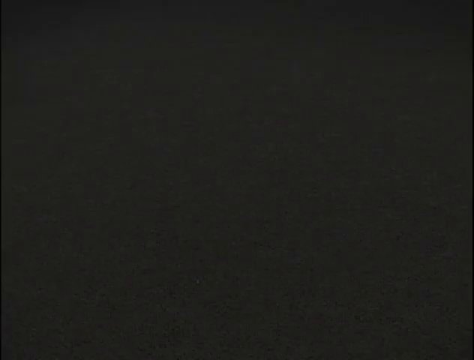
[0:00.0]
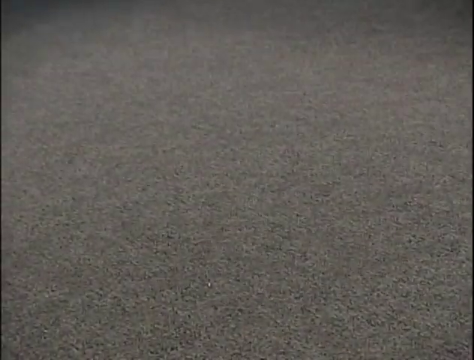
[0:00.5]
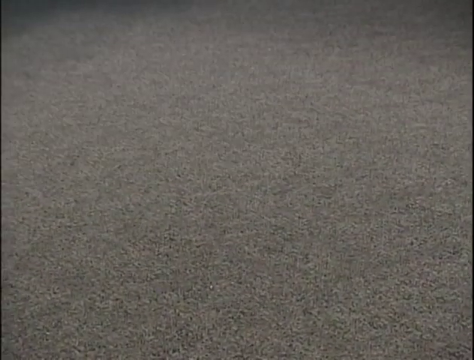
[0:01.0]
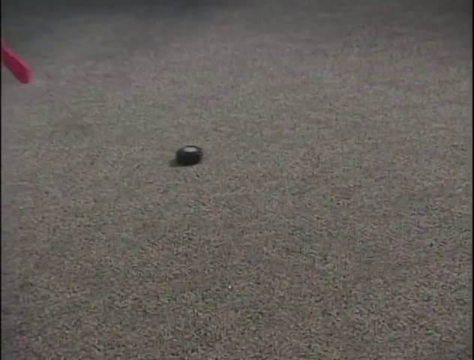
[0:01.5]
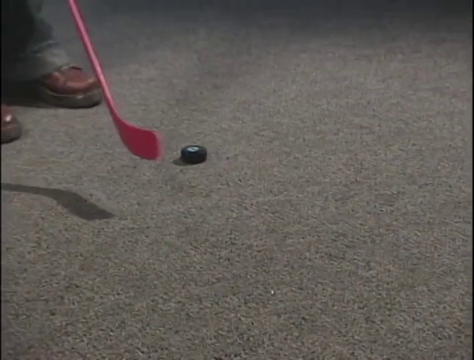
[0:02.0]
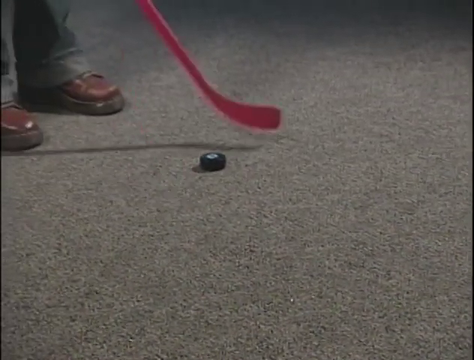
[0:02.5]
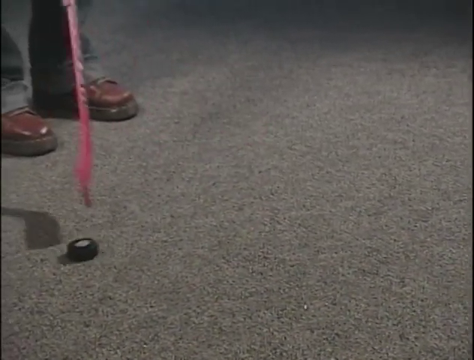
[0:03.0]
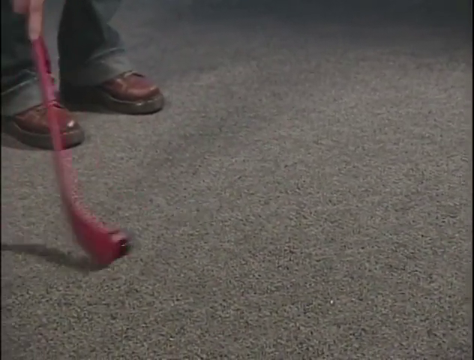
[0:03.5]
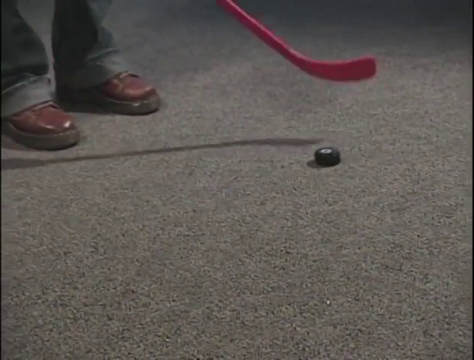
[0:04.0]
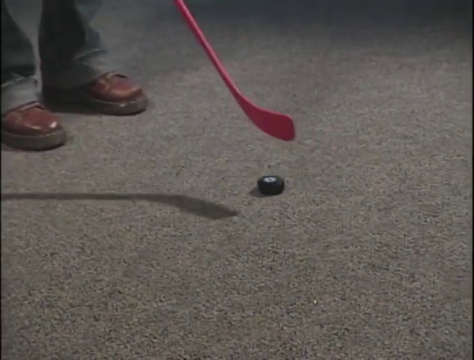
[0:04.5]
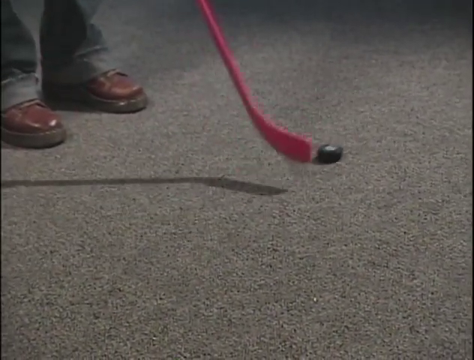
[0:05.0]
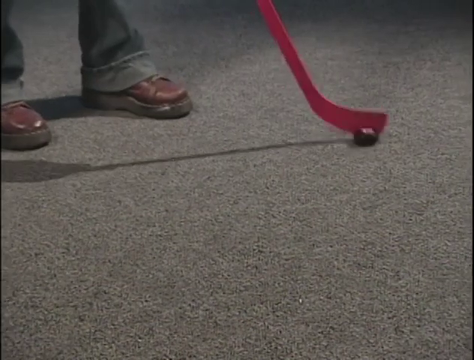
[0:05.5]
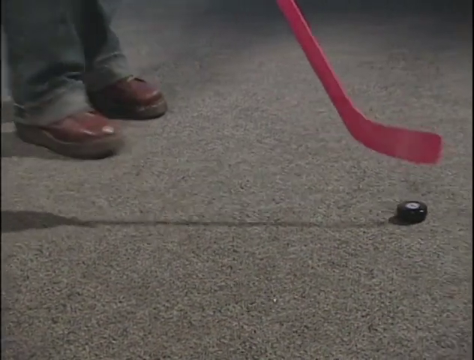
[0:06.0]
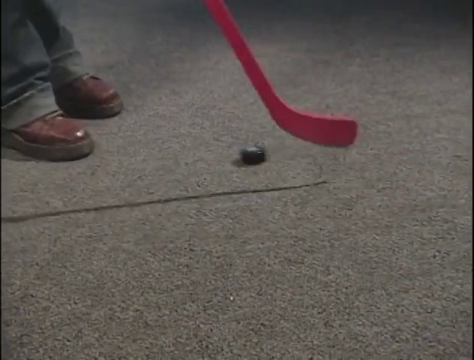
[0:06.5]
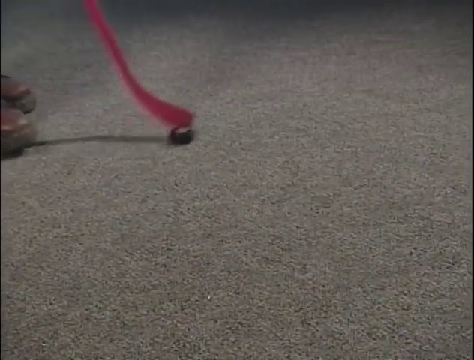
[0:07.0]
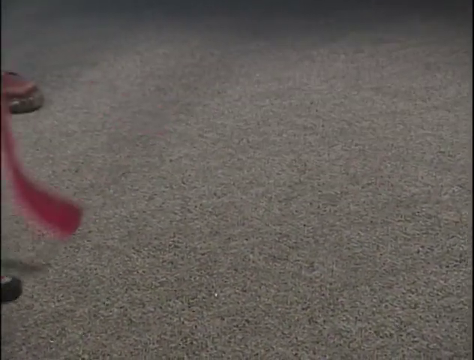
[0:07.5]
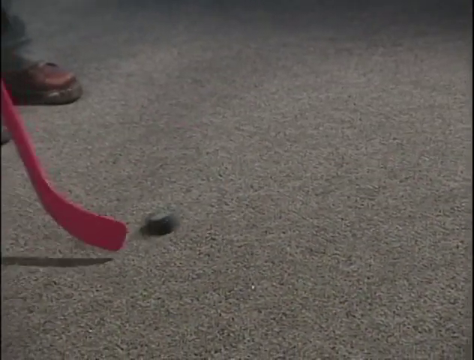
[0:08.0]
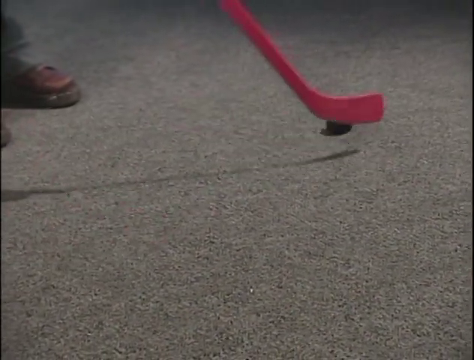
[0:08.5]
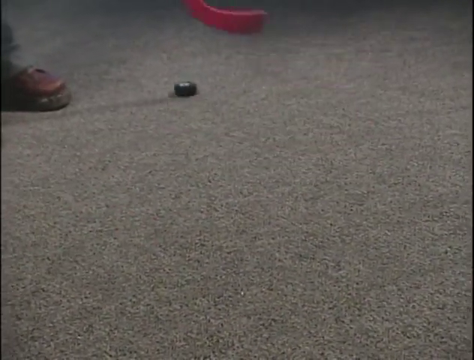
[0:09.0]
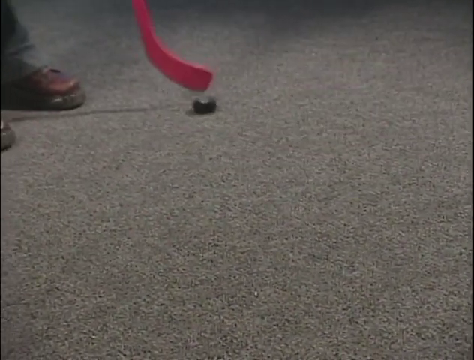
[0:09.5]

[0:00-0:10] The video opens on a gray floor that looks like carpet. A man, apparently wearing brown shoes and very long jeans that are cuffed over, holds a pink hockey stick and bats a hockey puck around. Someone hits the puck toward him, and he bats it first right, then left, then right and left, up and down, right and left, back and up, and then everything stops. It appears to be a demonstration.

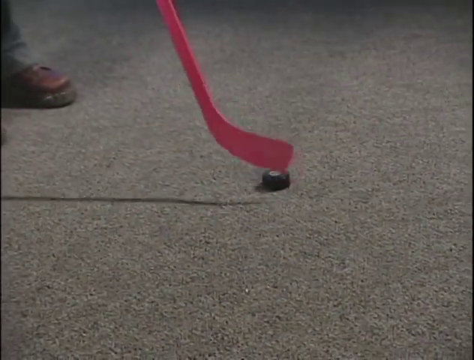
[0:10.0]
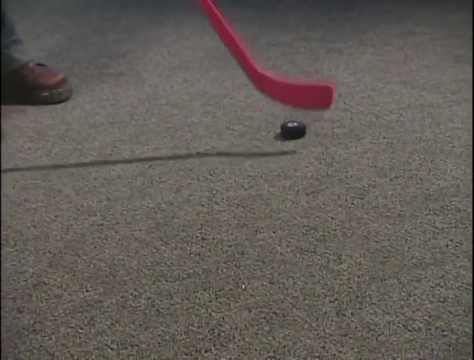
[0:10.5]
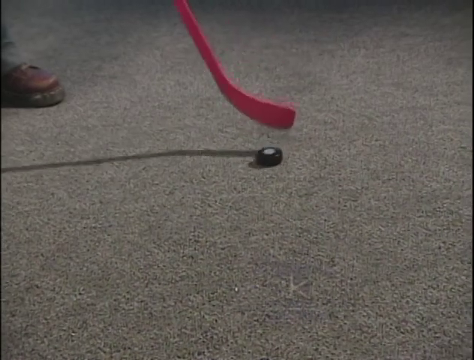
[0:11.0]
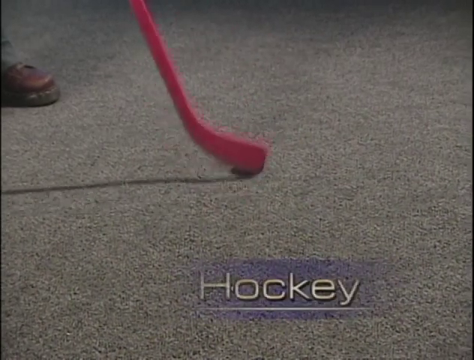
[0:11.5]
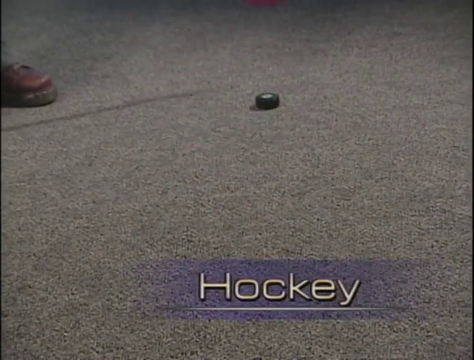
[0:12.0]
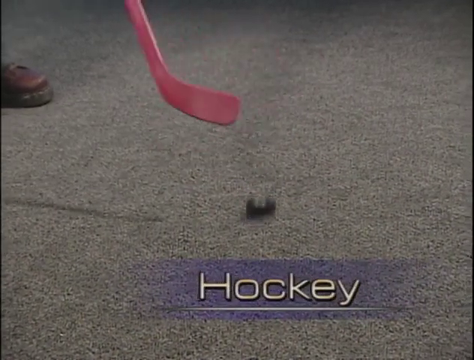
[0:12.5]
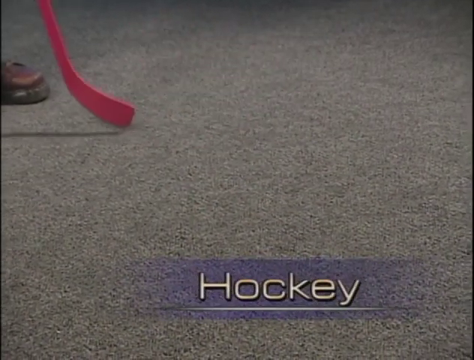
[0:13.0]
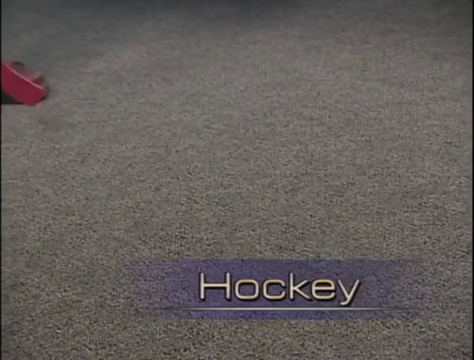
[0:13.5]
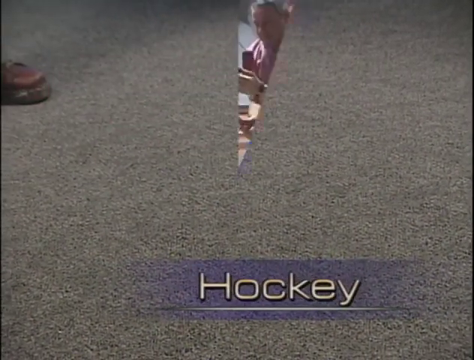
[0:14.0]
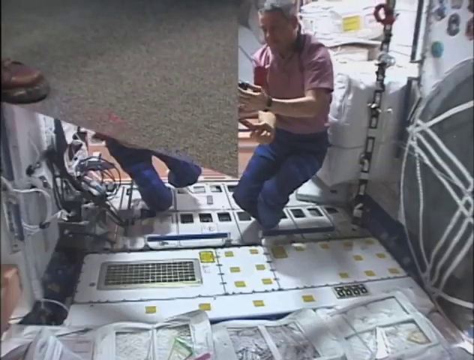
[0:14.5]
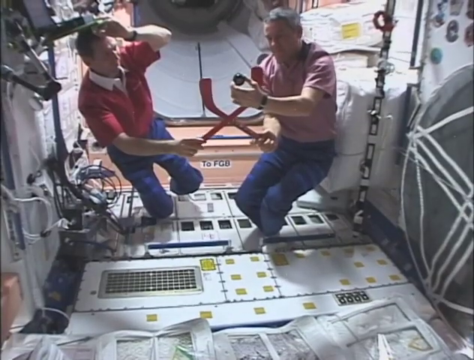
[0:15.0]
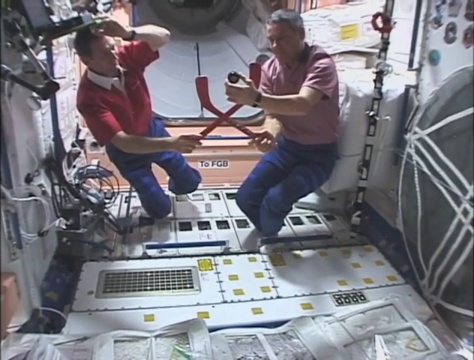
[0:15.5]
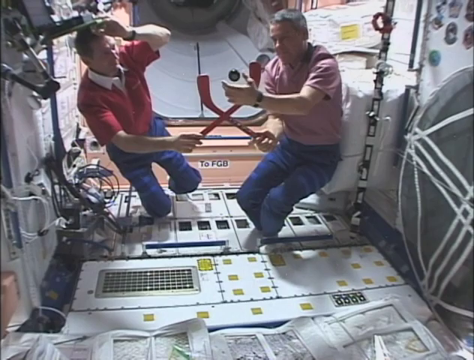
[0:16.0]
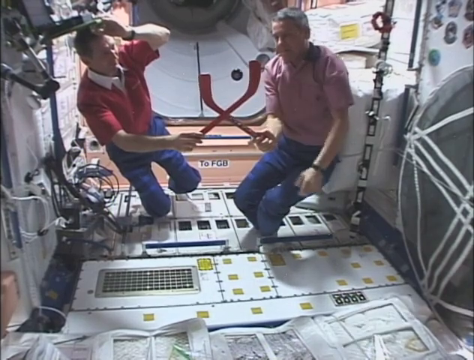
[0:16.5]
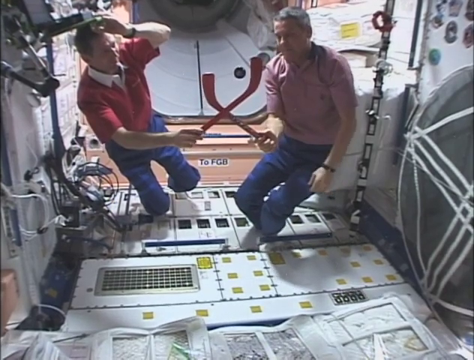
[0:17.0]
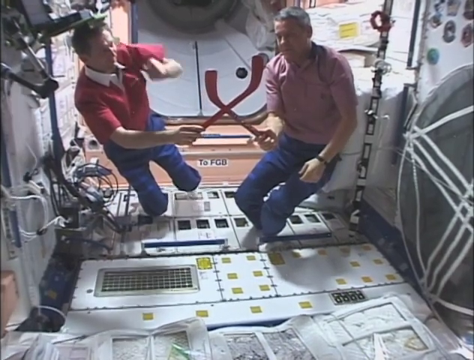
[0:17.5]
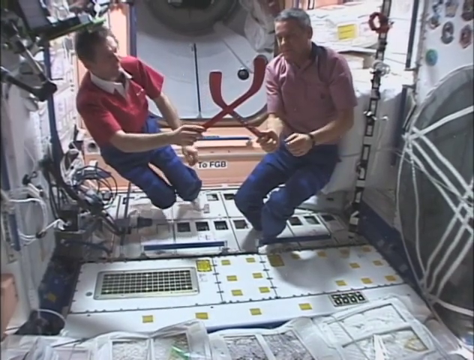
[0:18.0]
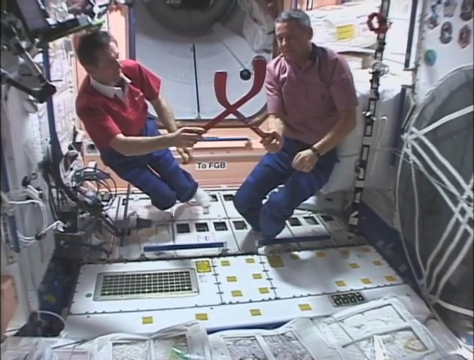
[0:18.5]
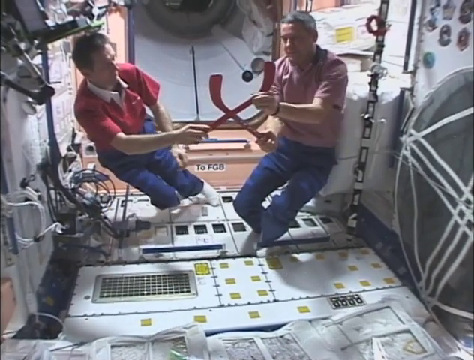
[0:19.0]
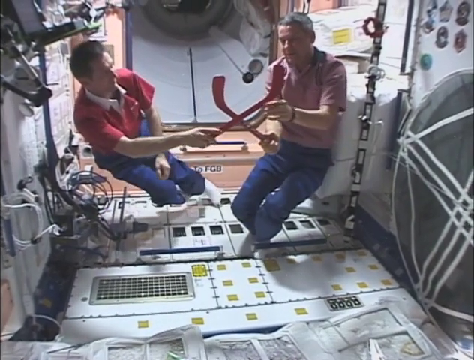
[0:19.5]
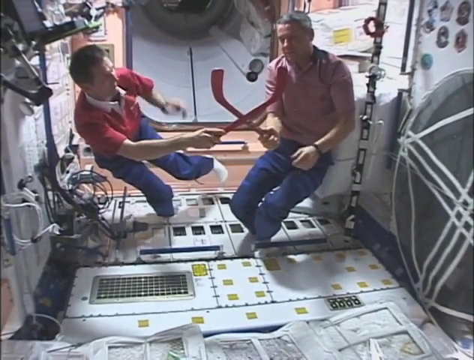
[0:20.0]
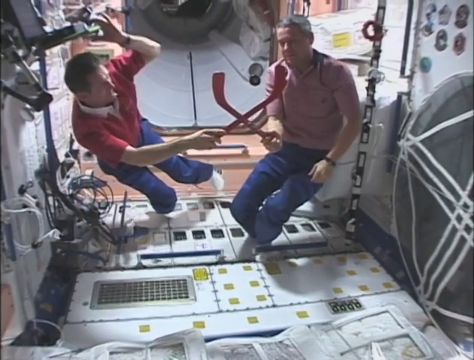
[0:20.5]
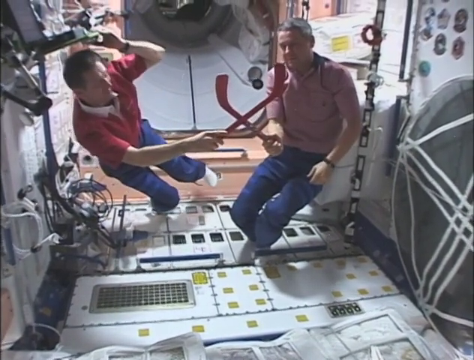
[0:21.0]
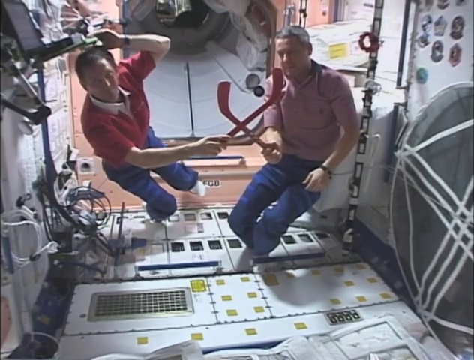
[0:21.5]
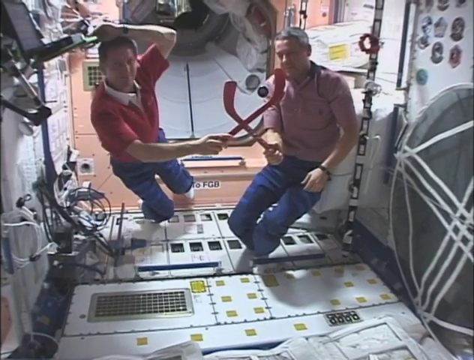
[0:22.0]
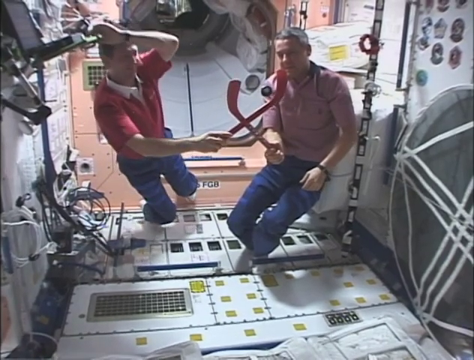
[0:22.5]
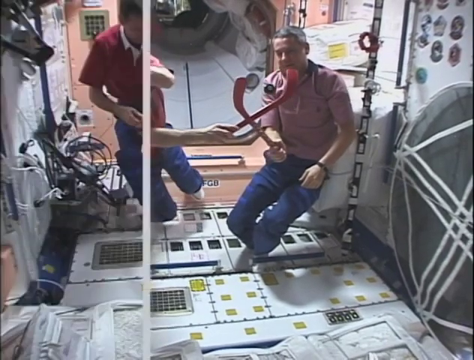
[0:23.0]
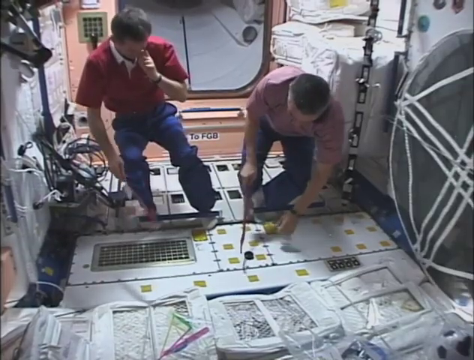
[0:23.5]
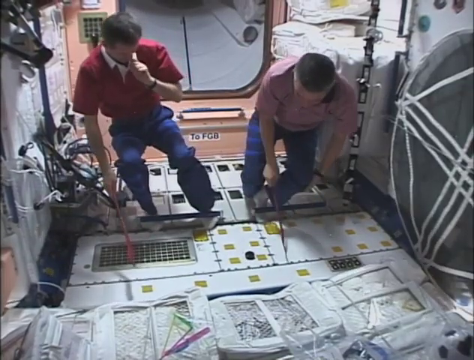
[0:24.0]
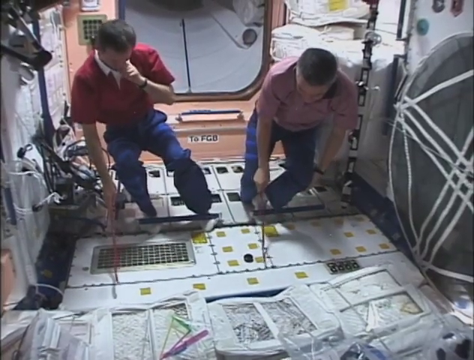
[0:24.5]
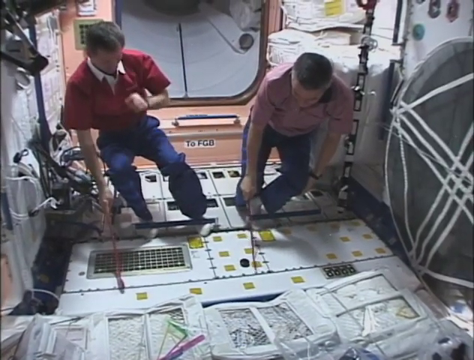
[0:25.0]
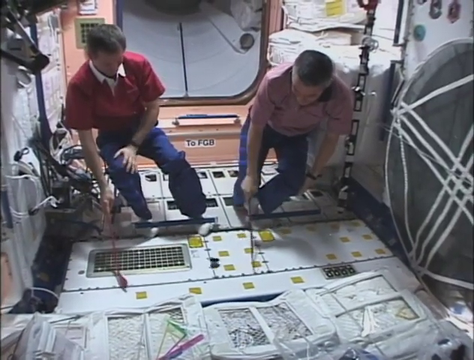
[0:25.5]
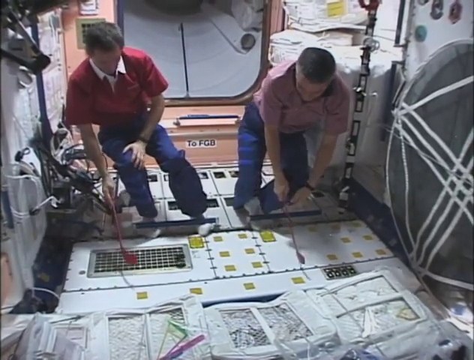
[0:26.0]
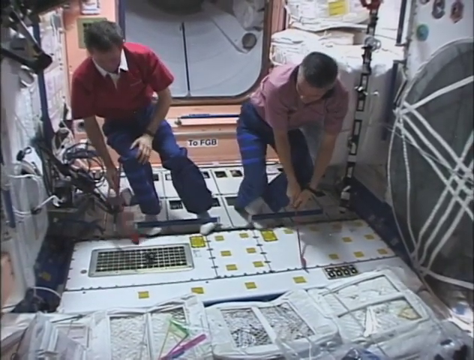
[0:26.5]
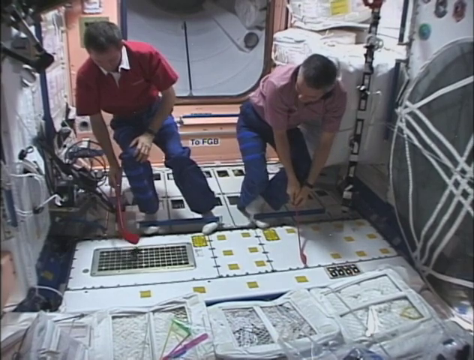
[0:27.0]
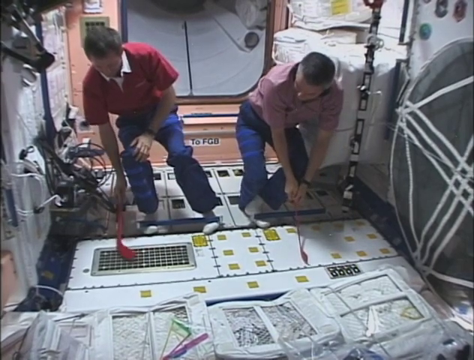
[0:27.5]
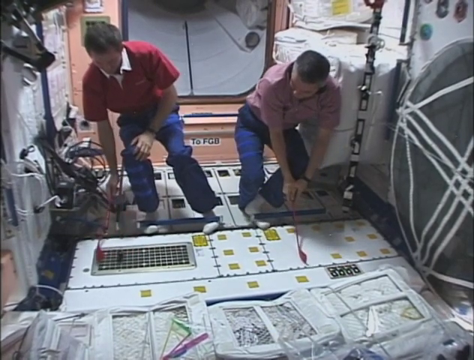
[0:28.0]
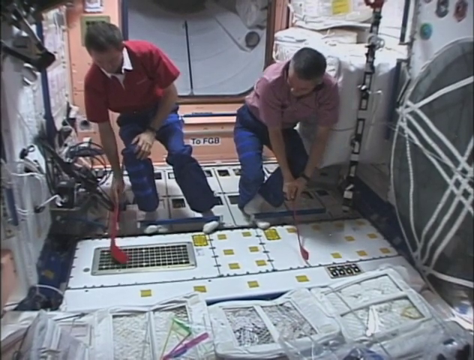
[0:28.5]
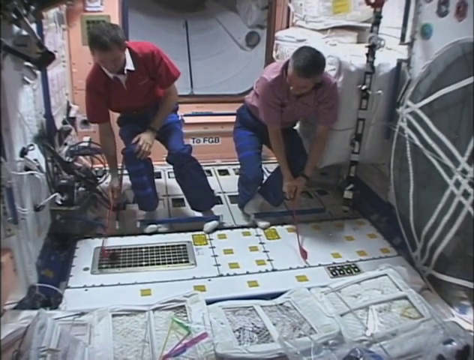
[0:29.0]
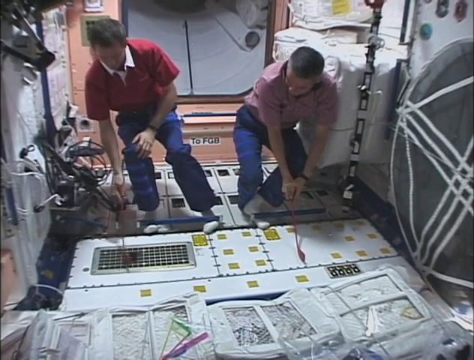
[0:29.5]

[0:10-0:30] The man's foot, in the brown shoe and long cuffed pants, is at the top left corner of the screen, with the hockey puck on the gray floor, which is possibly concrete. Text appears showing "hockey". Next, two men appear to be in space with pink hockey sticks, and the hockey puck is floating. The puck is placed down and floats a little above the surface, seeming to hover in the air as the two men hit it back and forth. One man wears blue pants and a pink shirt; the other wears blue jeans and a red shirt with a white collar. Both men appear to be in socks, and it looks like they are in a weightless environment. Their knees are bent, and their hockey sticks are crossed.